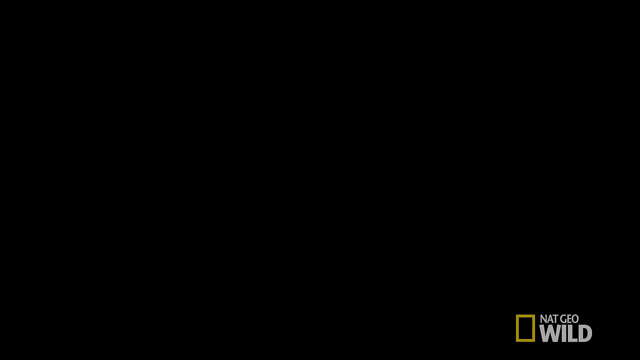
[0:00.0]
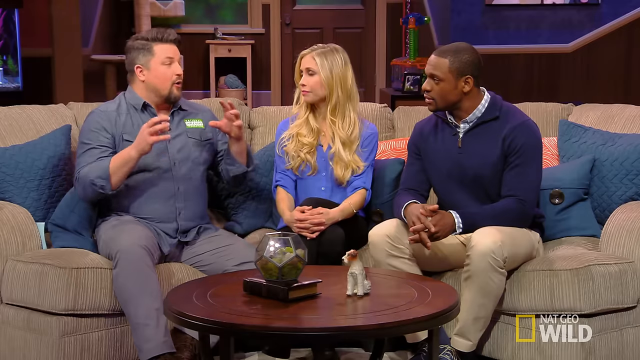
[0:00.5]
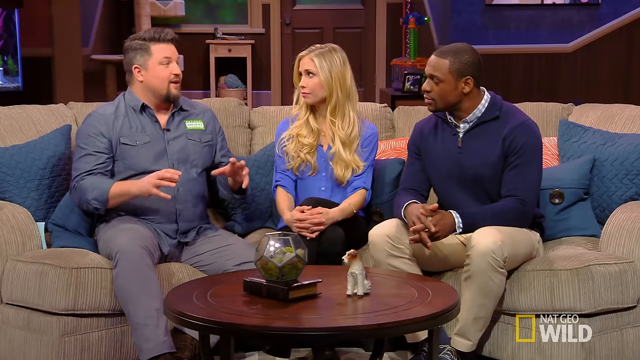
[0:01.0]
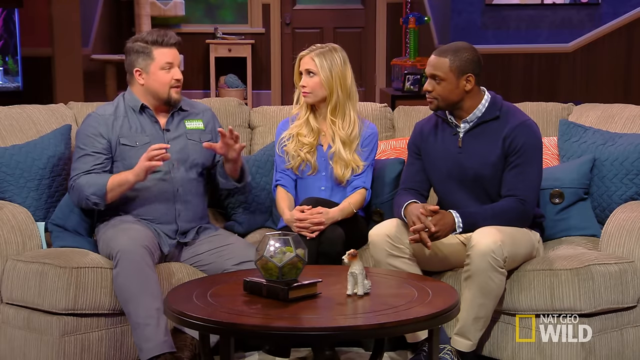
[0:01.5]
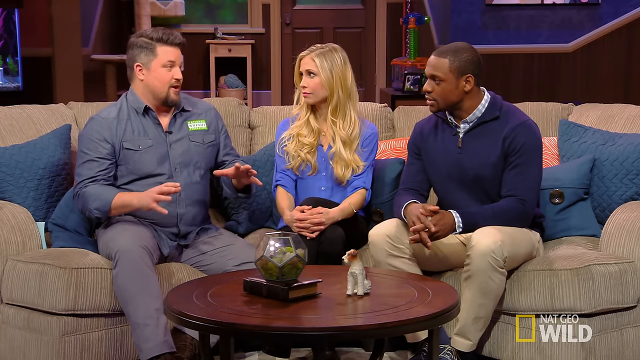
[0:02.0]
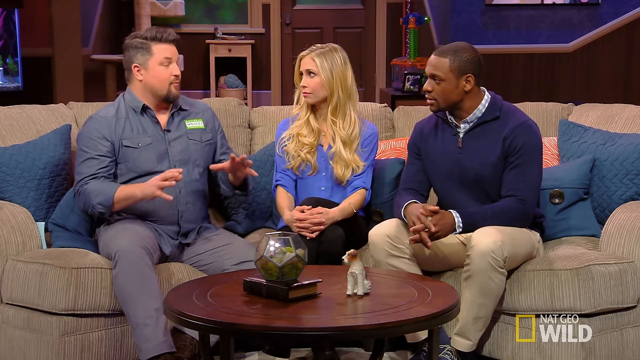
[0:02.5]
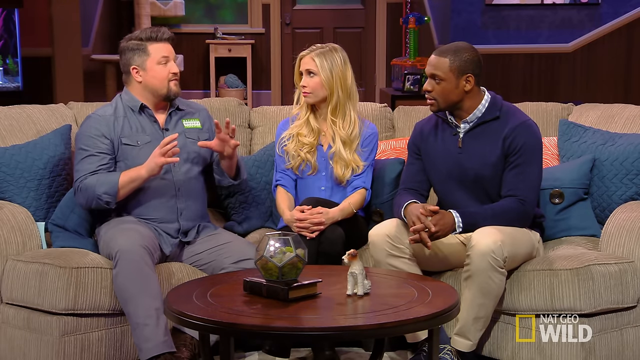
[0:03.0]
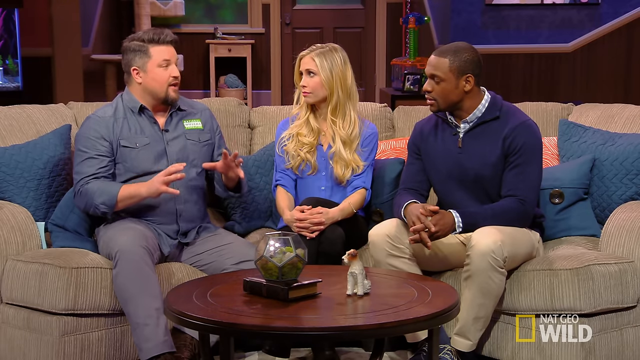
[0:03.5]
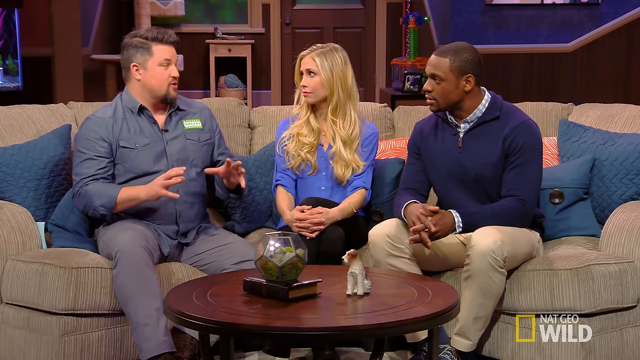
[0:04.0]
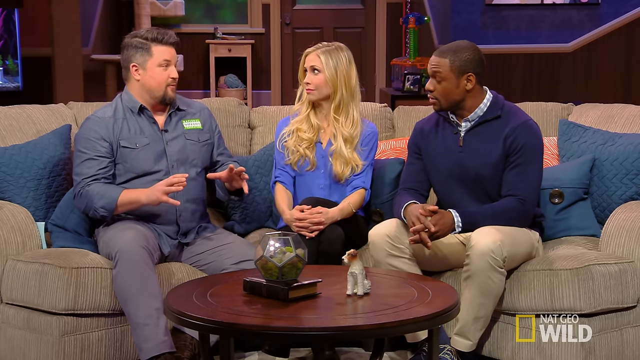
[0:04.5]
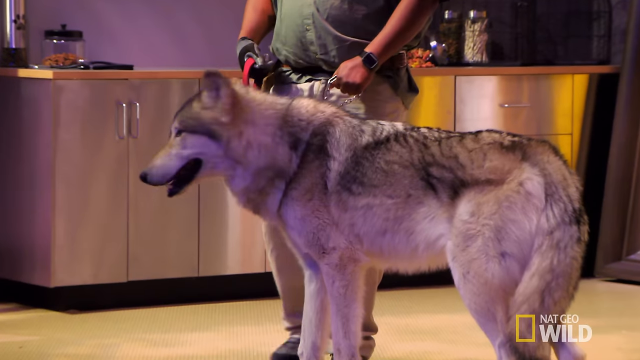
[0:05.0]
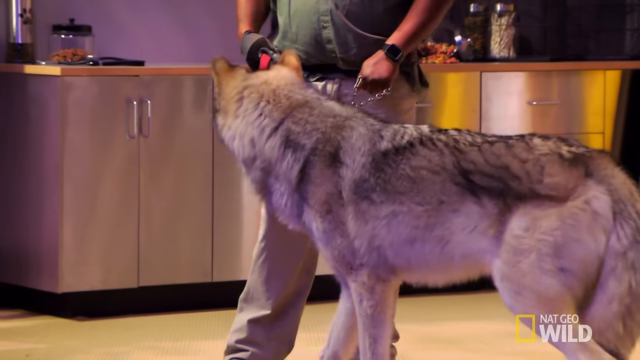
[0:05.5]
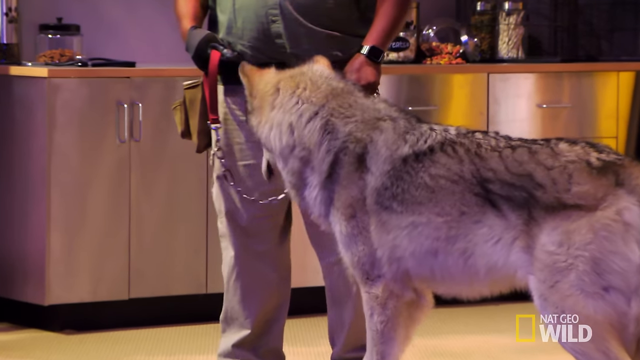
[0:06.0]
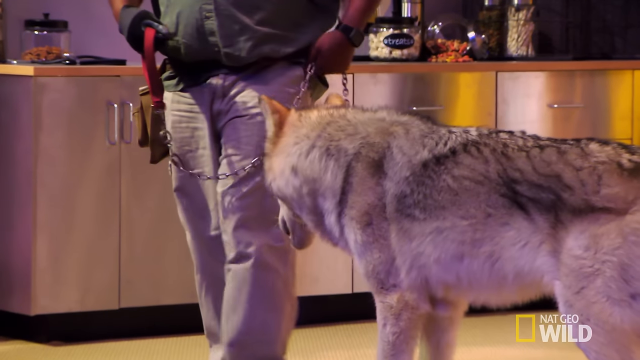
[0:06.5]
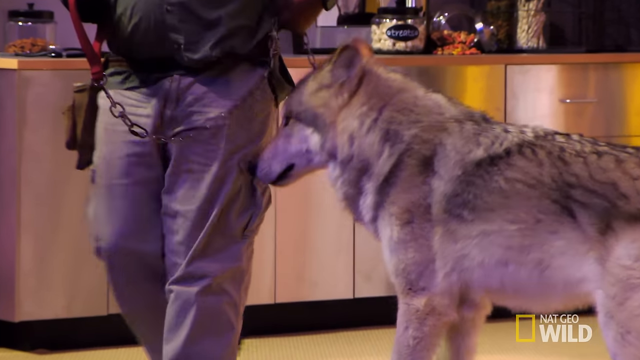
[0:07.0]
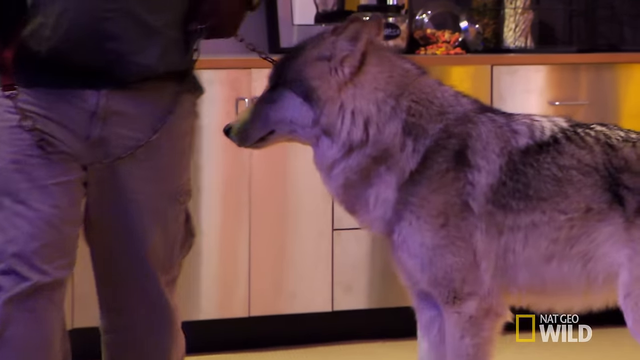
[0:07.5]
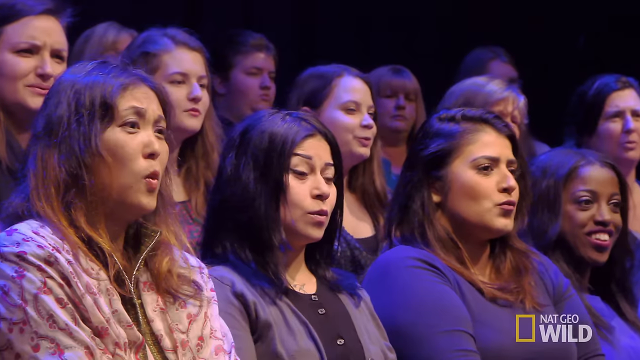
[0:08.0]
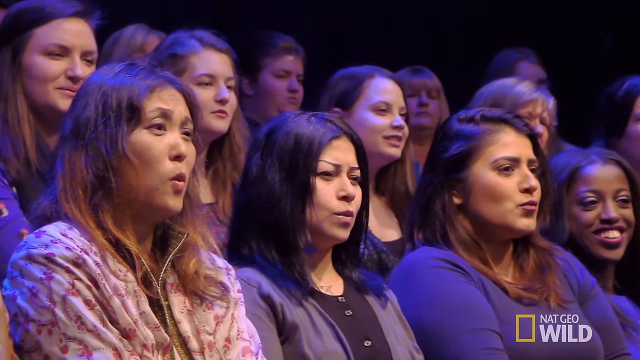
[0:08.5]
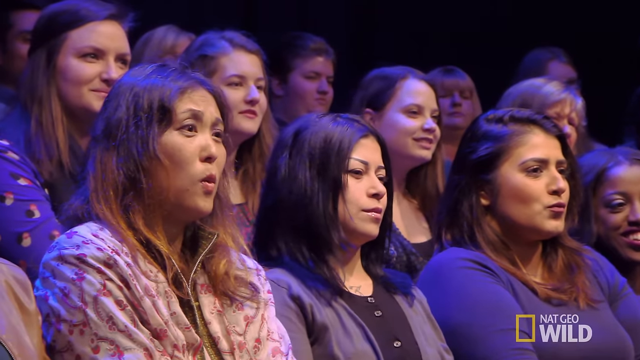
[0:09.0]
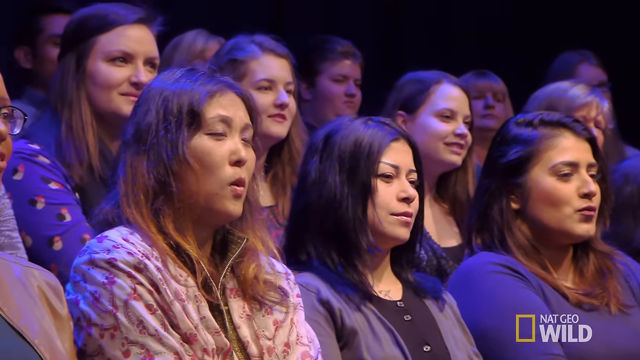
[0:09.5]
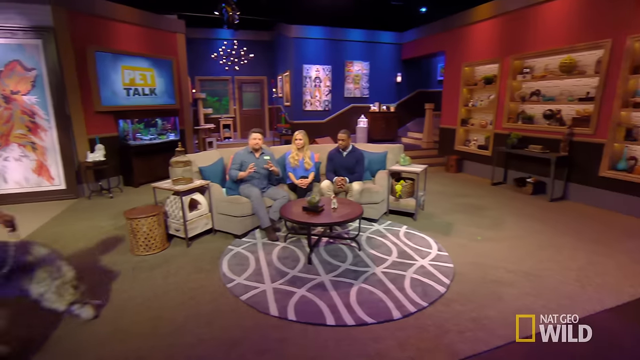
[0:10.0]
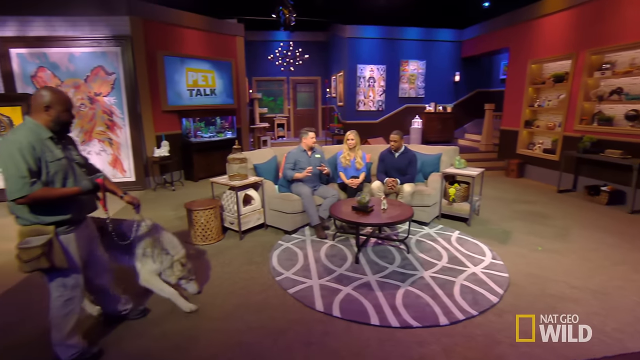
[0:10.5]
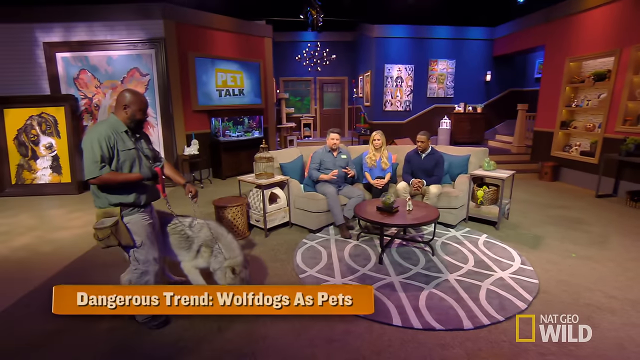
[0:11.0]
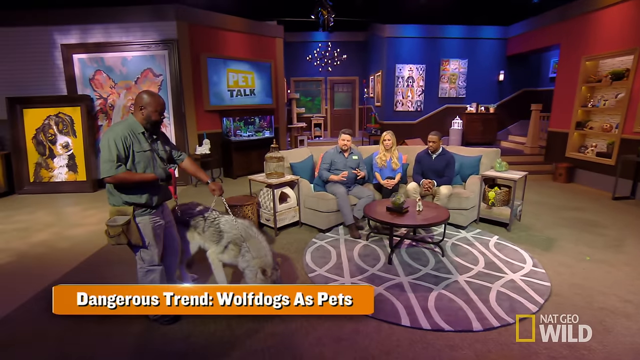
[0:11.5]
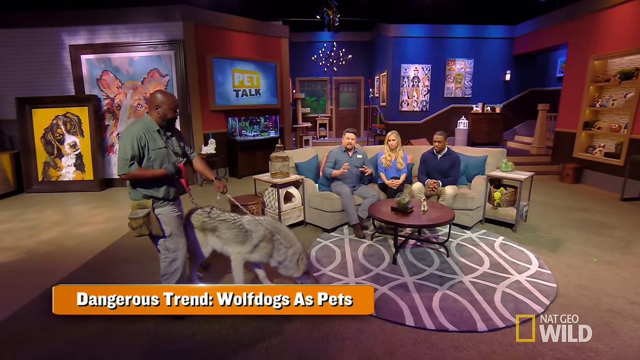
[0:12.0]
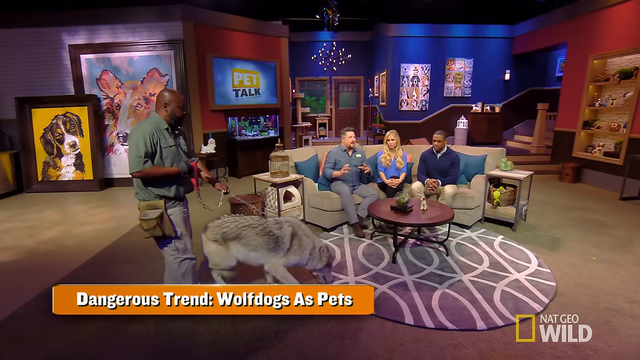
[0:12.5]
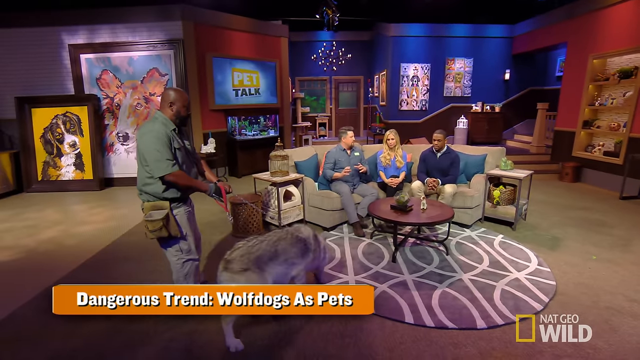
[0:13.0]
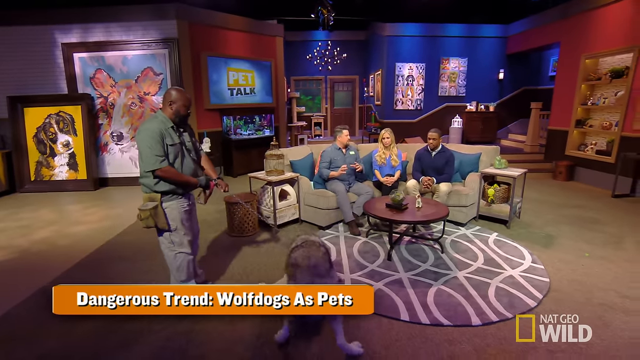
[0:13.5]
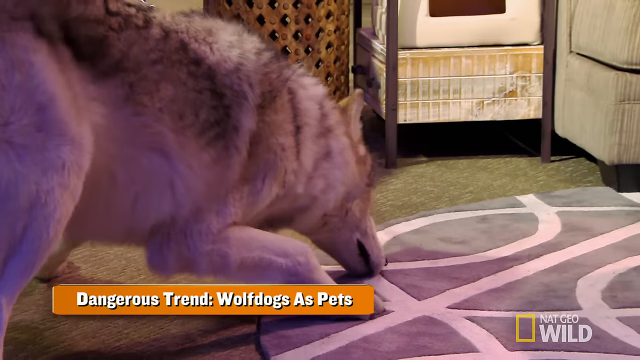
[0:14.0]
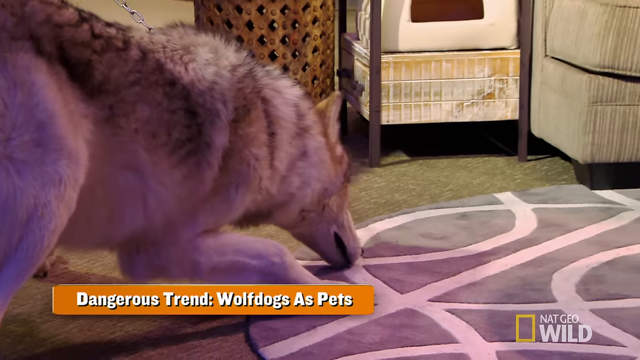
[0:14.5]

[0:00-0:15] A wolf dog that looks like a wolf, apparently a mix of dog and wolf, appears in a room where a group of people are sitting down in what looks like a talk show. The main speaker, a white man, is sitting with a white lady and a black man, and they are discussing. Another dog that looks like a husky rather than a wolf dog is eventually brought onto the show. From the speaker's demonstration, the discussion seems to be about the dangers and risks of keeping a wild animal as a pet.